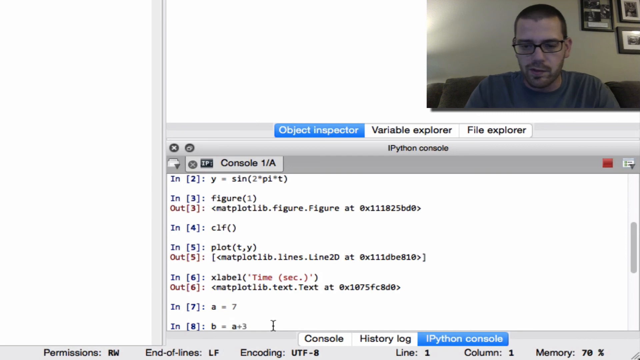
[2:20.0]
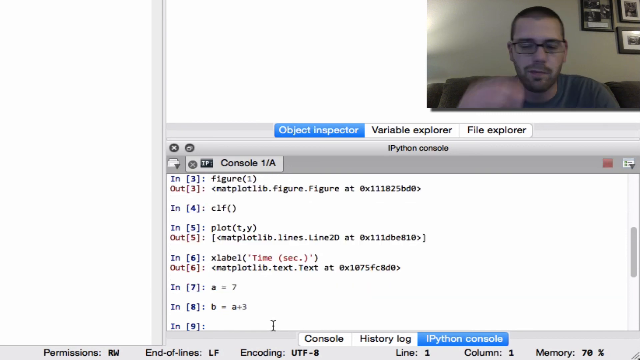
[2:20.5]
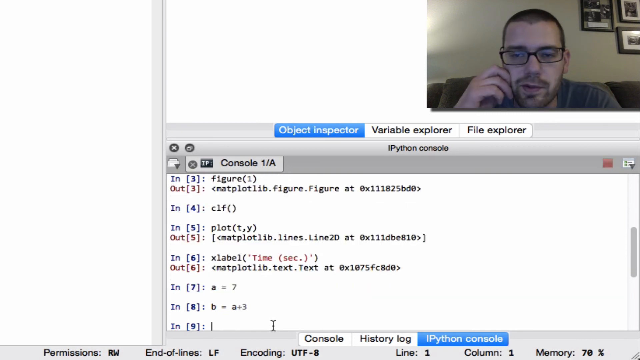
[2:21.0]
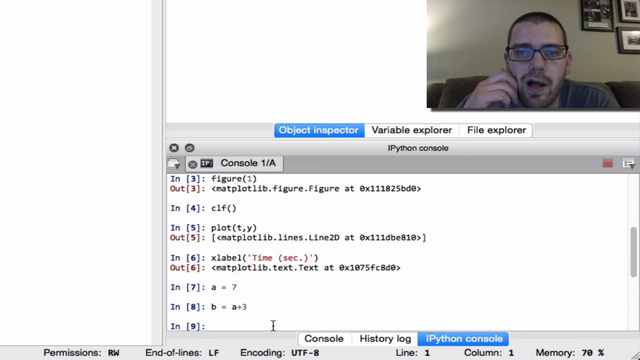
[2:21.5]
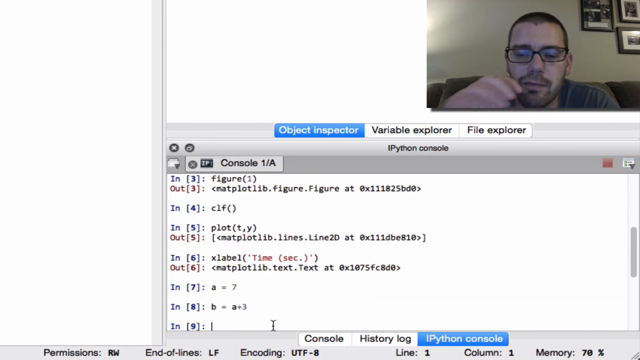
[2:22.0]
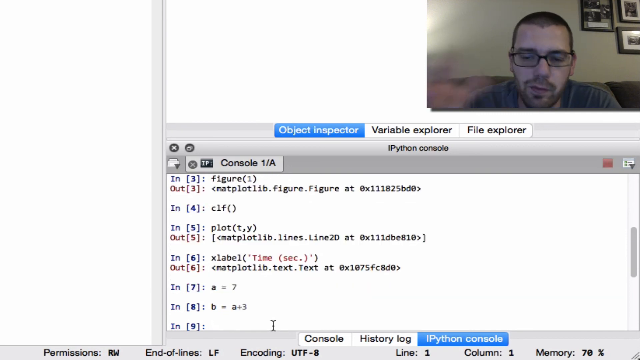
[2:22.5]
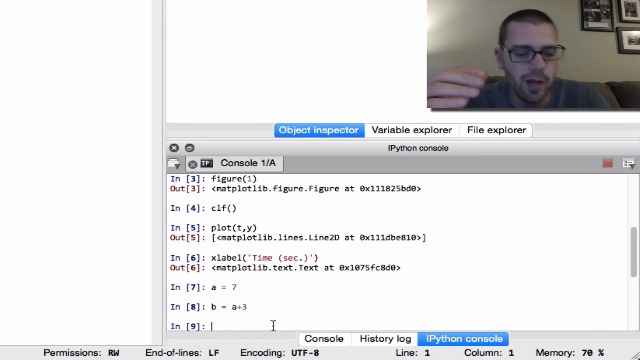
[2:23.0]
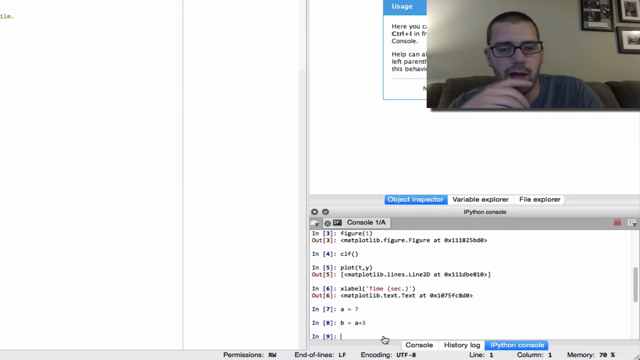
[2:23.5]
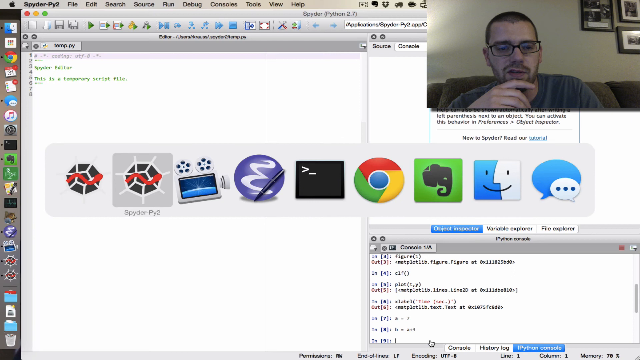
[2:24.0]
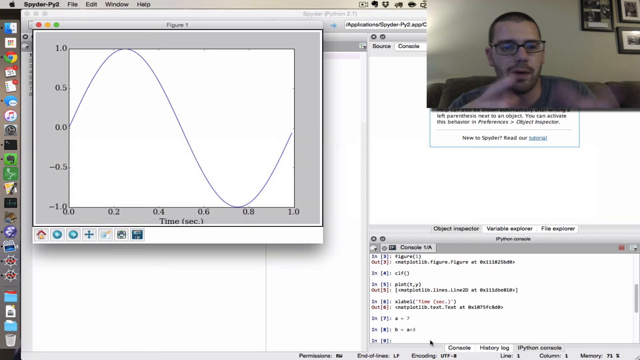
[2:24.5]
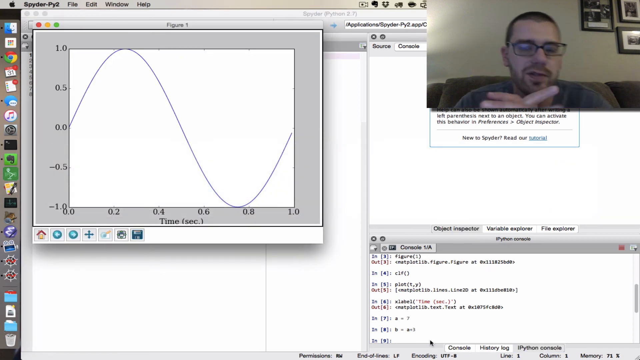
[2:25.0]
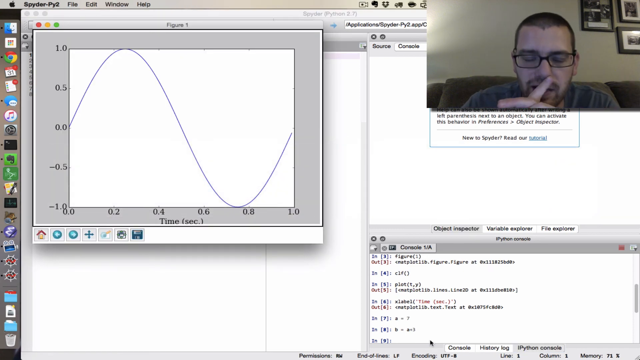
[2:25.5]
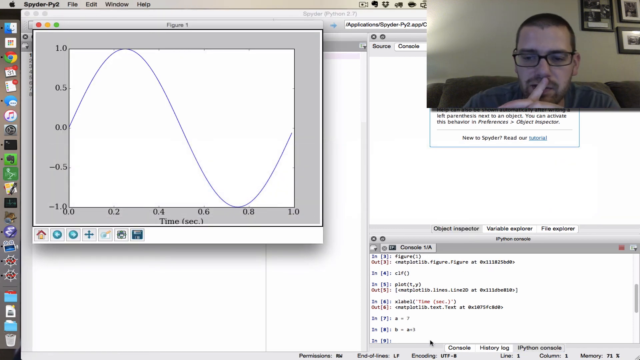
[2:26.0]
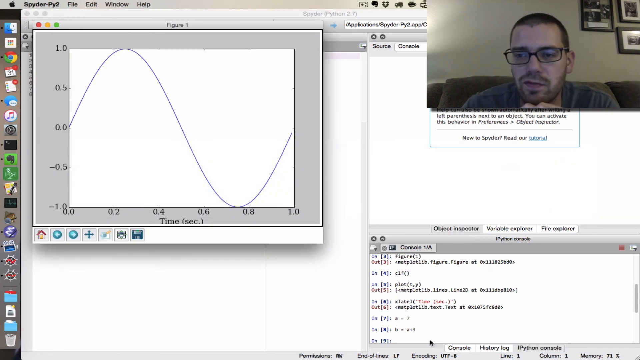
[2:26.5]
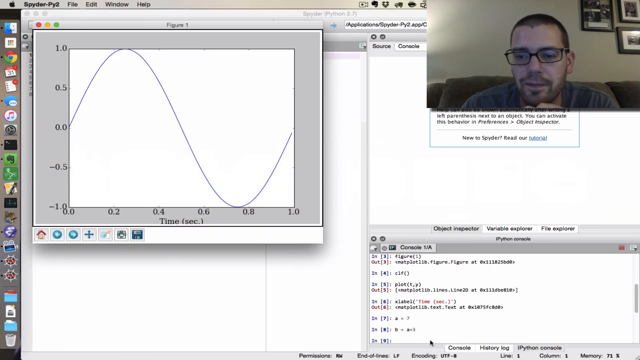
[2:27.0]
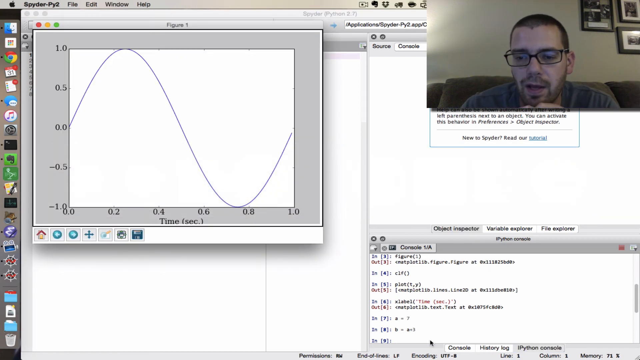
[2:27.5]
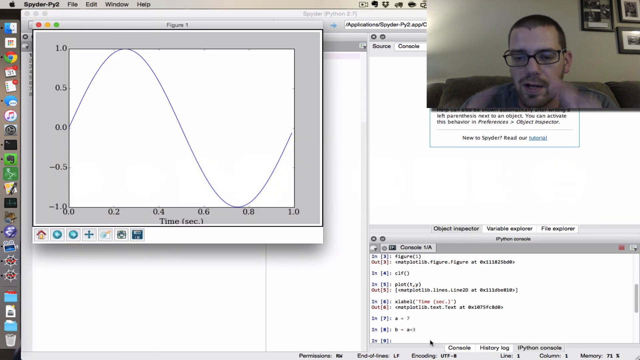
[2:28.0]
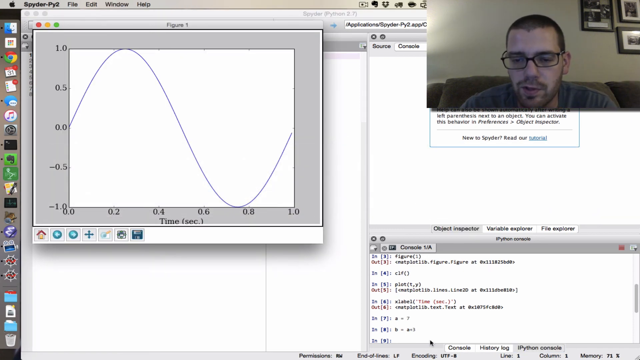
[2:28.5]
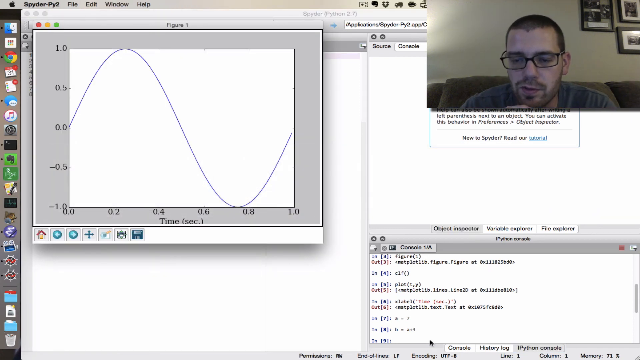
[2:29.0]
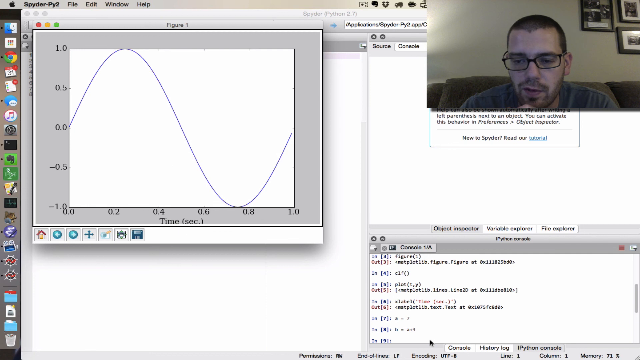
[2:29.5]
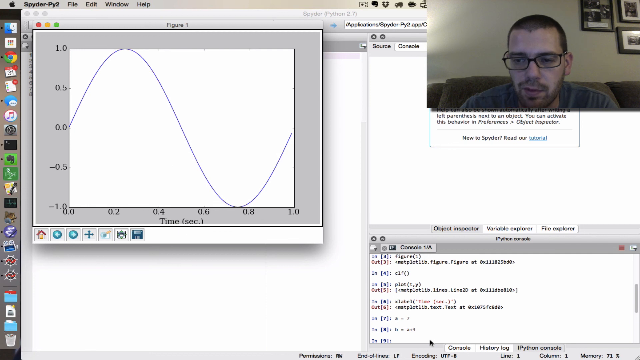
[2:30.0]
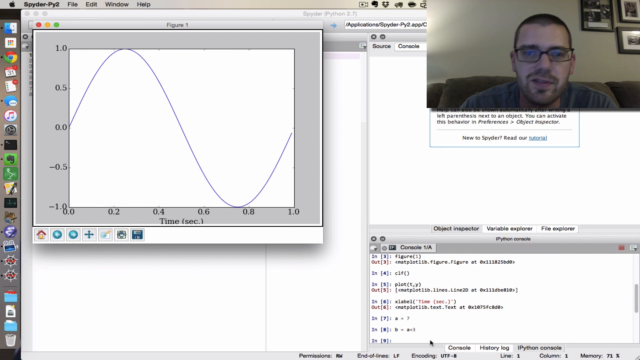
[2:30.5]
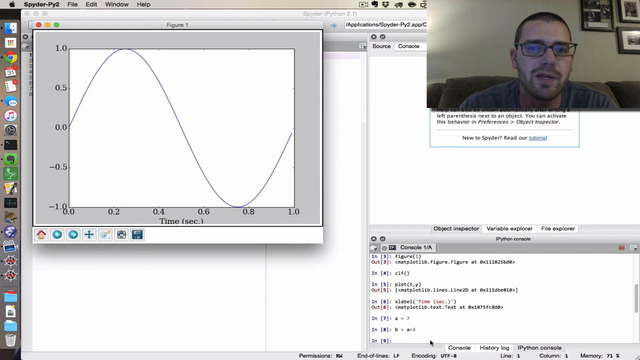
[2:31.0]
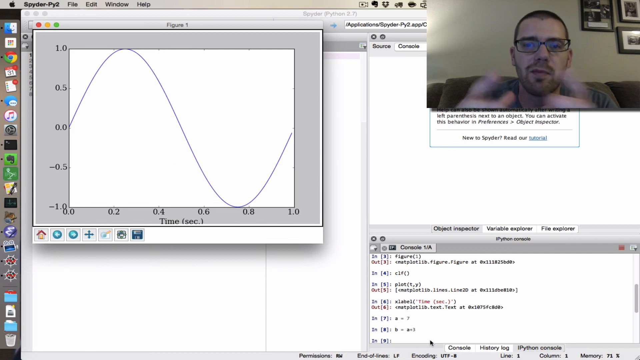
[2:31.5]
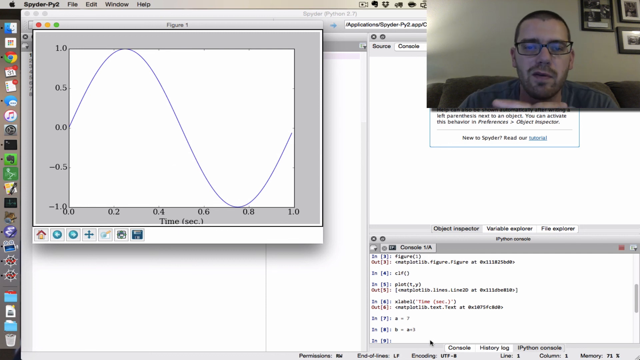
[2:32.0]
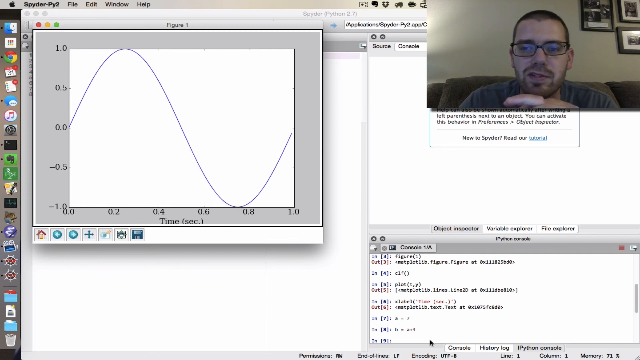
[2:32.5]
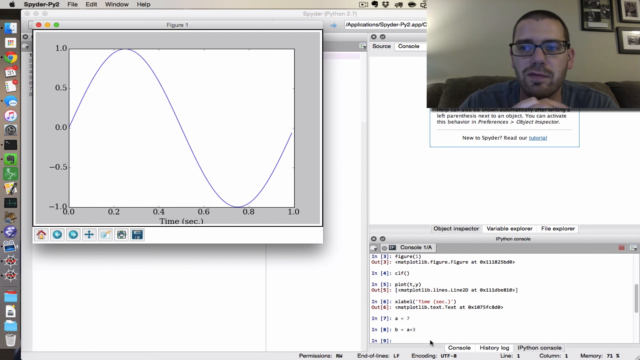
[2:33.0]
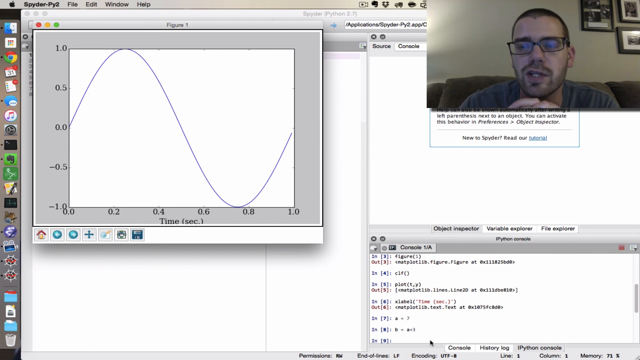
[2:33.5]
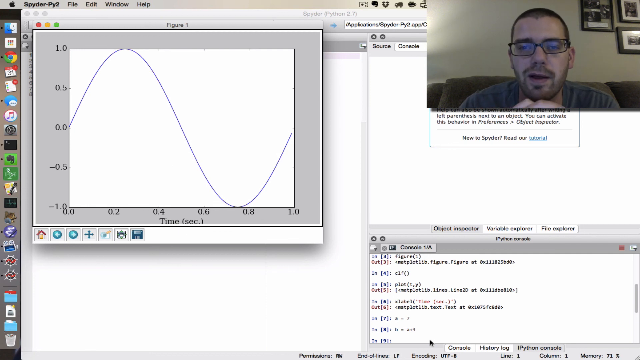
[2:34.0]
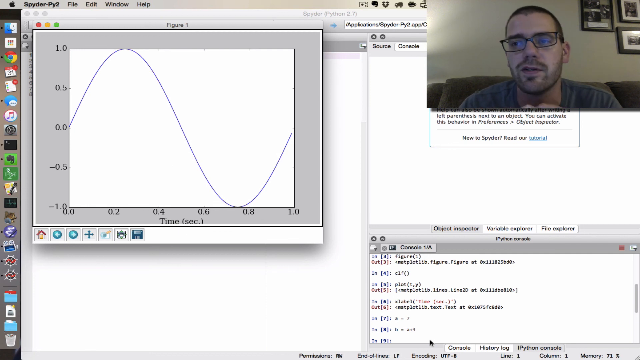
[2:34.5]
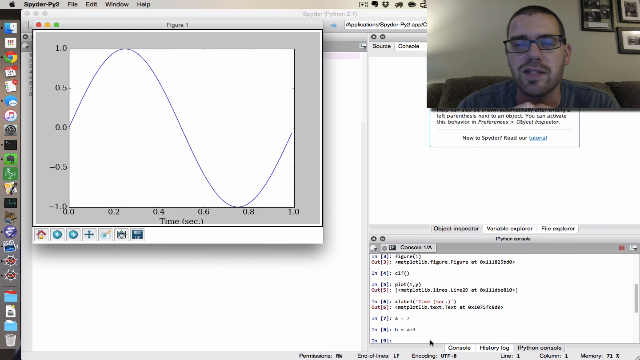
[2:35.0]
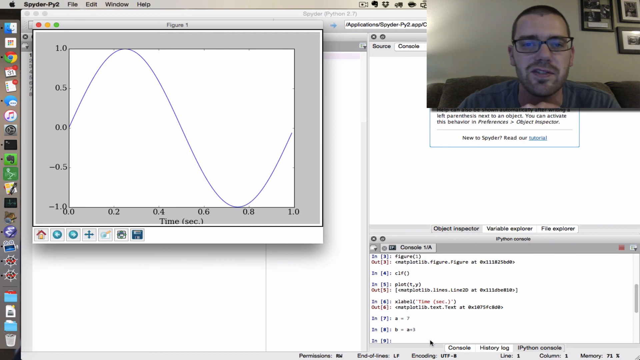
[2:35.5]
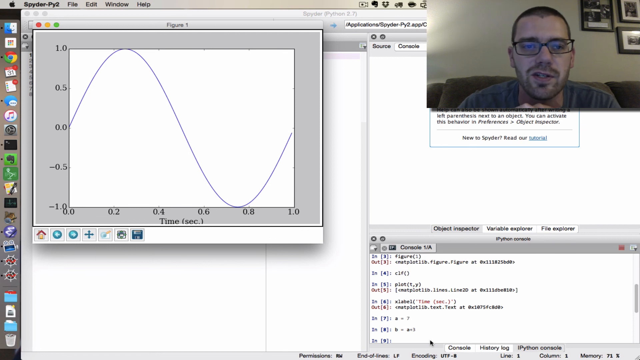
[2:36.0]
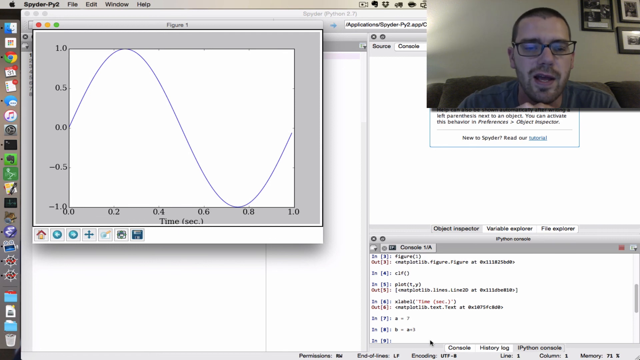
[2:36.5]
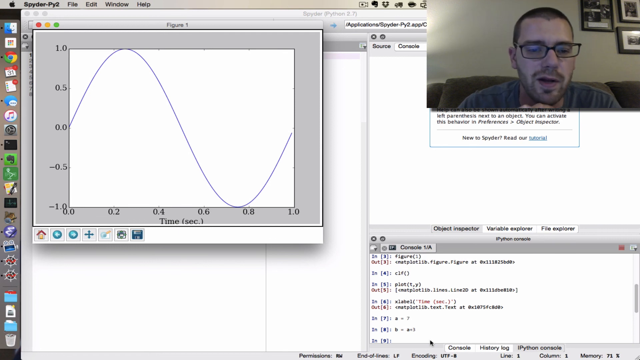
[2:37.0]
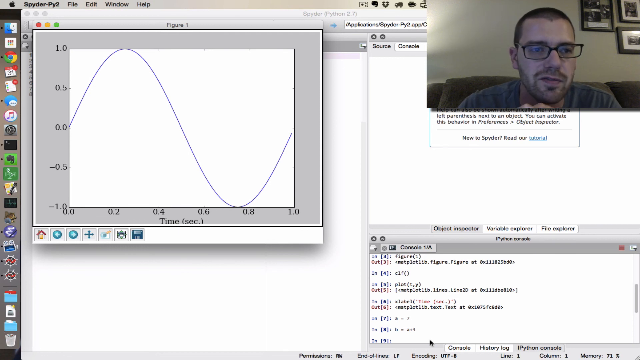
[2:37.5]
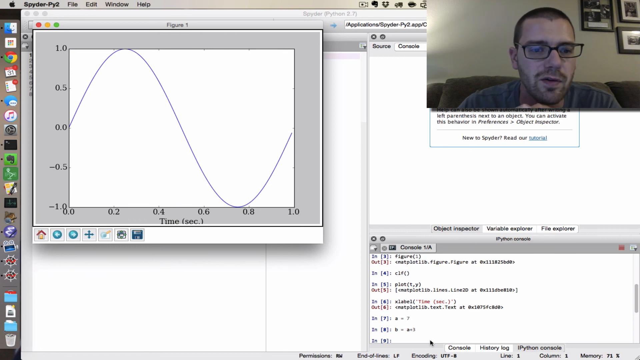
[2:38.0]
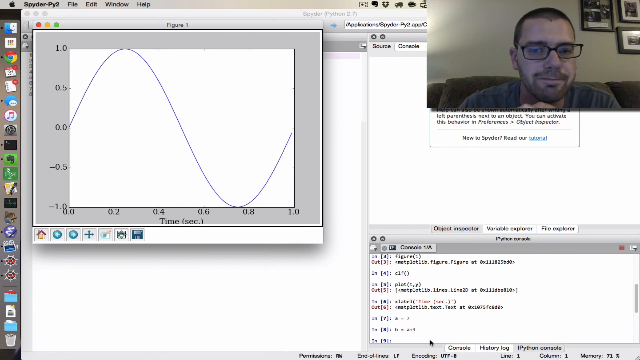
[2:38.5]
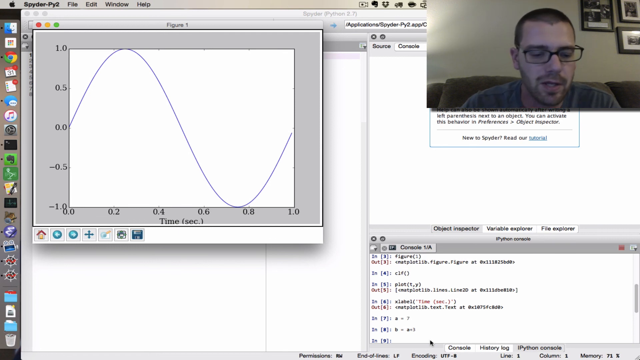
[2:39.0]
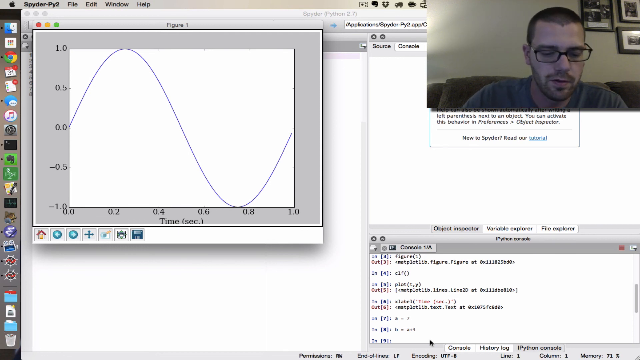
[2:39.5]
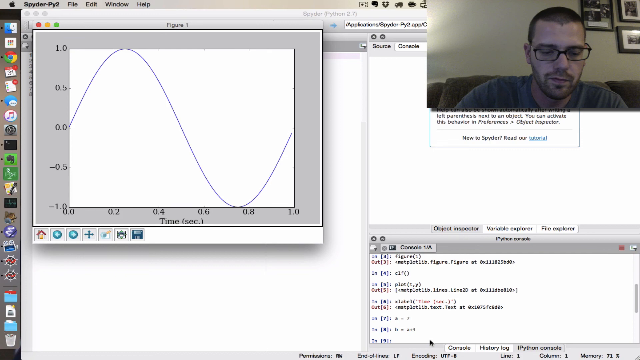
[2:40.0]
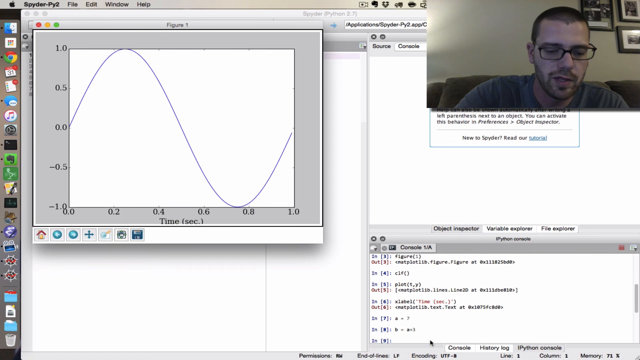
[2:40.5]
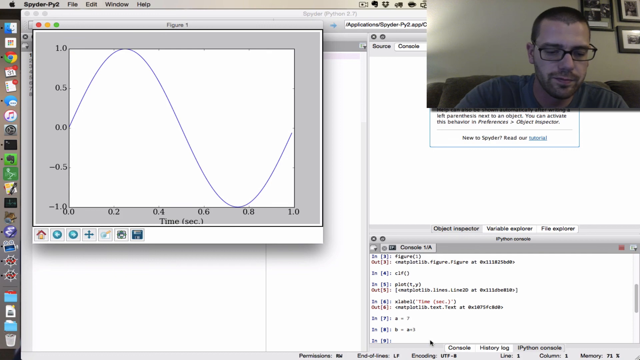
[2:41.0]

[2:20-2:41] He leans in, scratching his cheek a little while talking and explaining with his hand. He zooms out of the IPython console and clasps his fingers as he pulls up figure 1 with the wavy line again. He gestures with his hands as he talks, clasping them and then taking them apart to show different widths, apparently to show the magnification of the curved line he typed. He is working on a laptop, which is not visible, but he can be seen typing, and each time he thinks he looks up and away. He seems to be in a living room rather than an office building, with a wall behind him that looks beige. No lamp is visible, but some light source to the left illuminates the back wall. There are three framed pictures on the back wall to his far left, and the couch he is sitting on looks dark mocha. He types commands and code into the console to make the sine curve look the way he wants.